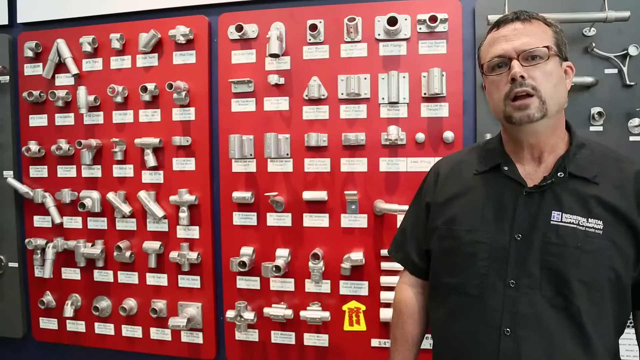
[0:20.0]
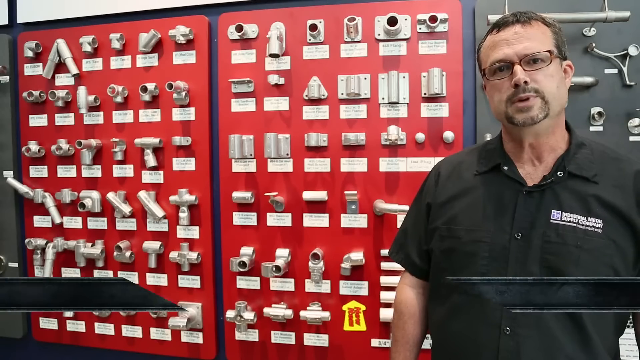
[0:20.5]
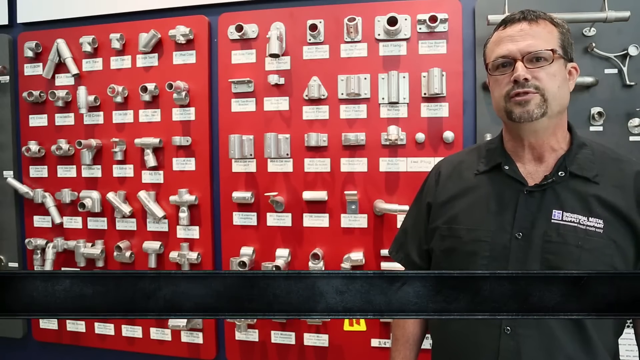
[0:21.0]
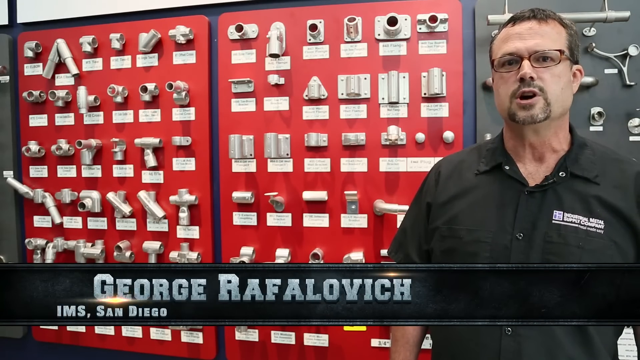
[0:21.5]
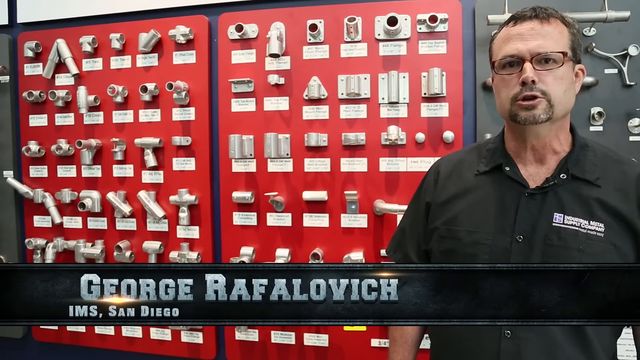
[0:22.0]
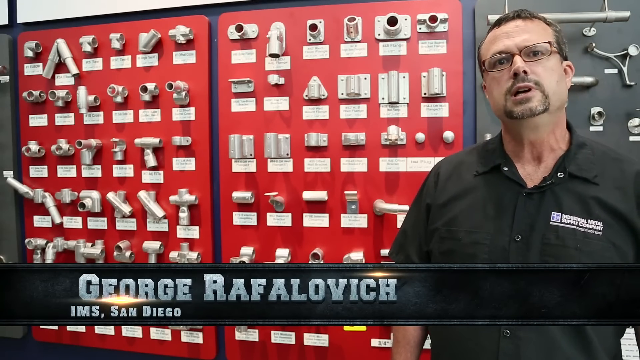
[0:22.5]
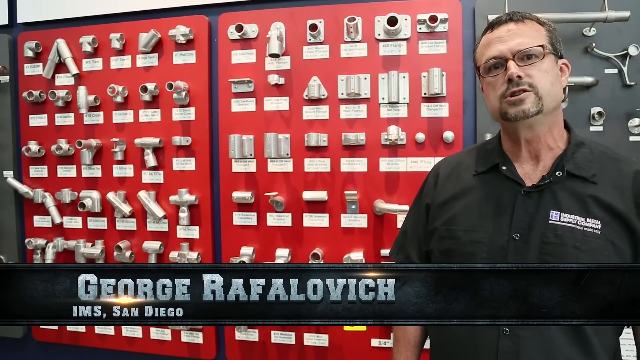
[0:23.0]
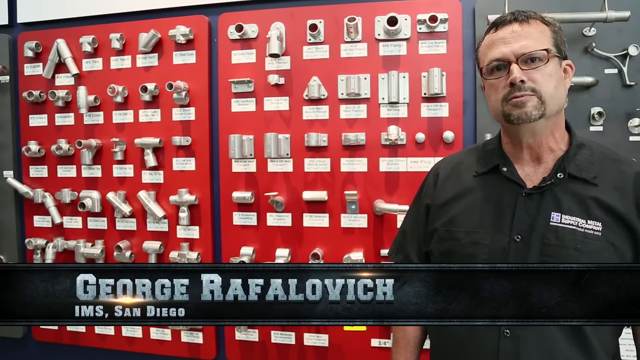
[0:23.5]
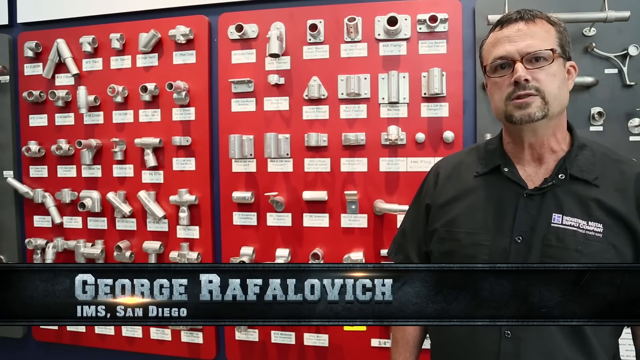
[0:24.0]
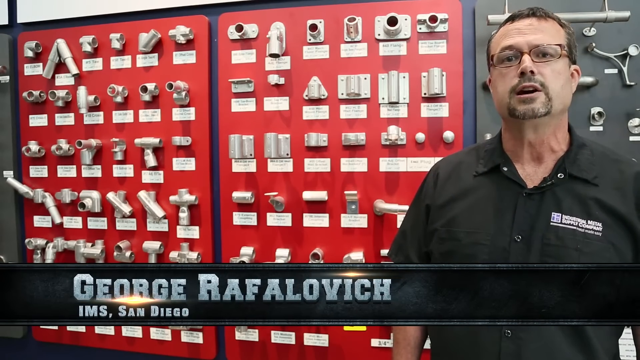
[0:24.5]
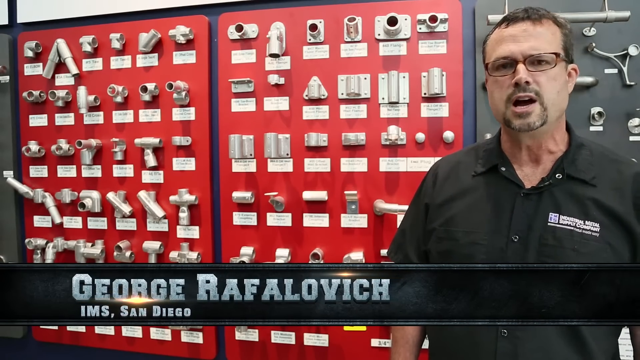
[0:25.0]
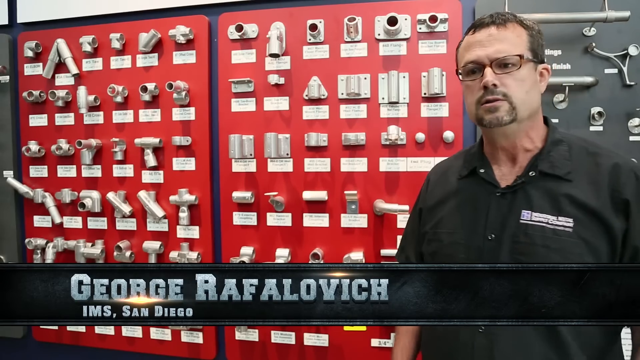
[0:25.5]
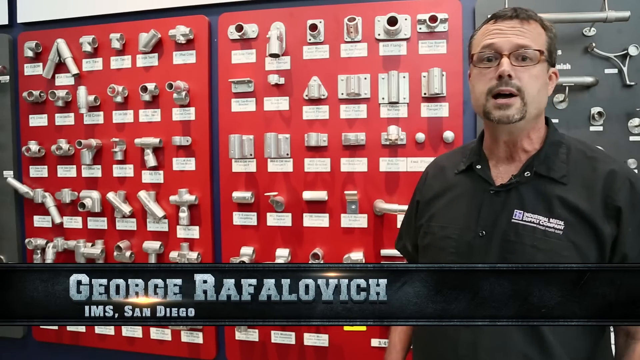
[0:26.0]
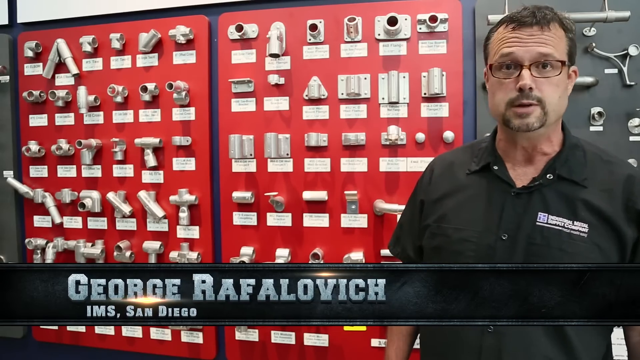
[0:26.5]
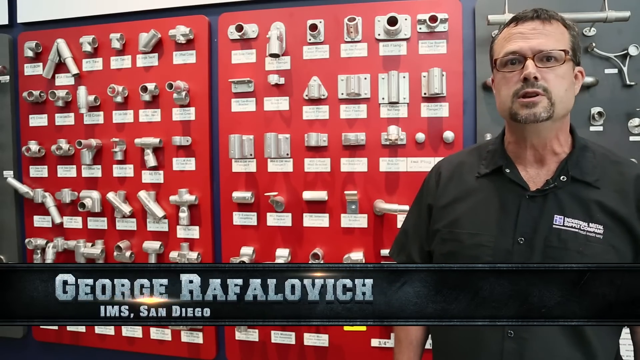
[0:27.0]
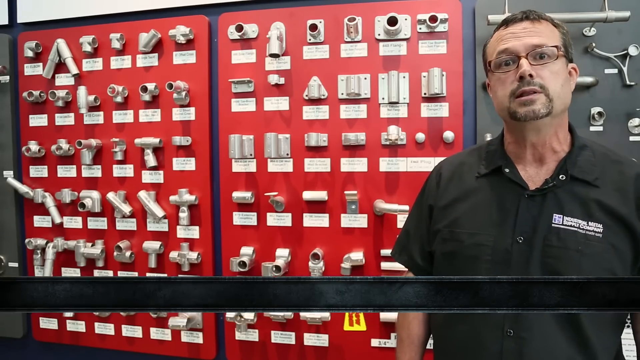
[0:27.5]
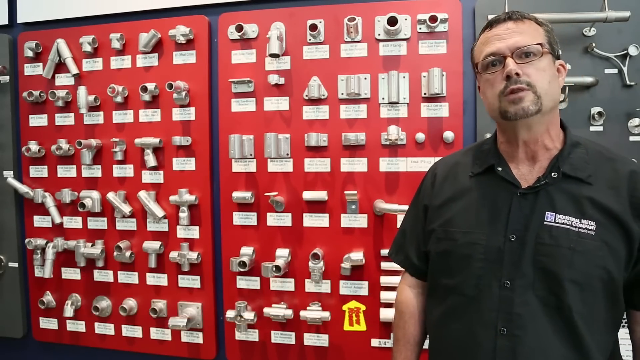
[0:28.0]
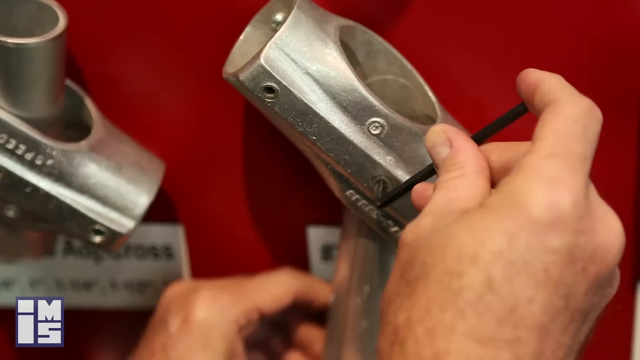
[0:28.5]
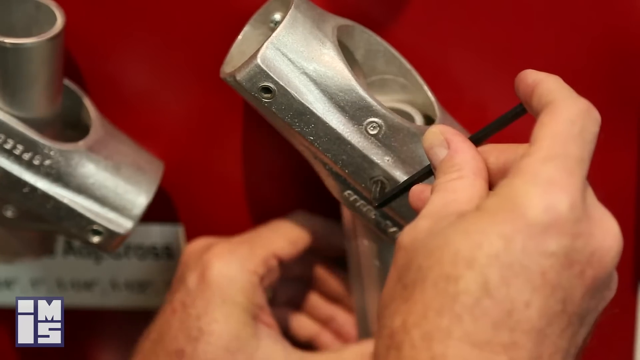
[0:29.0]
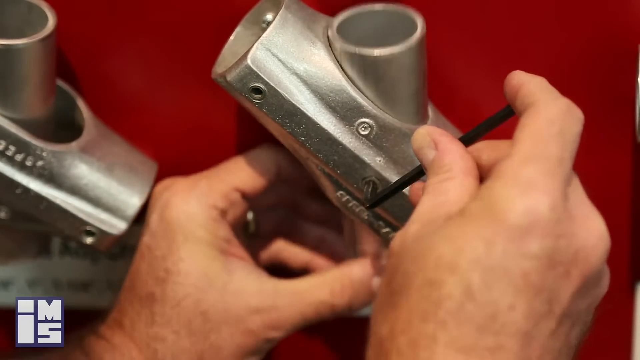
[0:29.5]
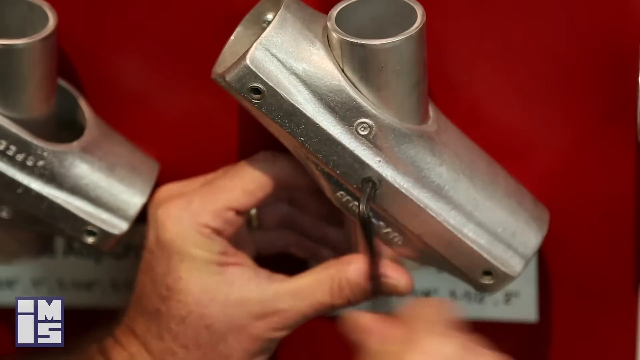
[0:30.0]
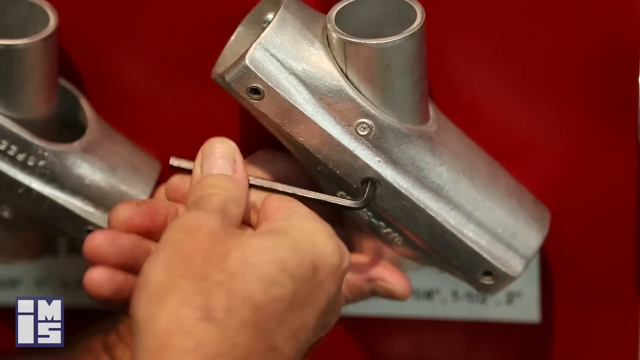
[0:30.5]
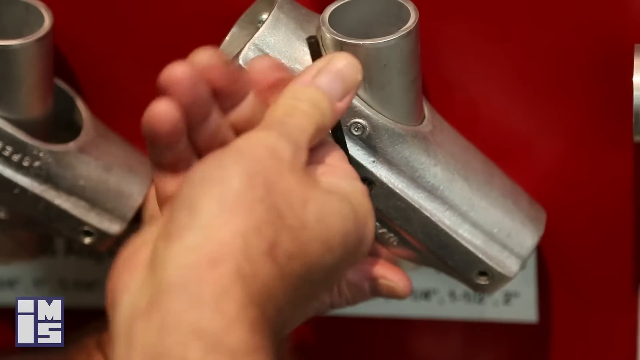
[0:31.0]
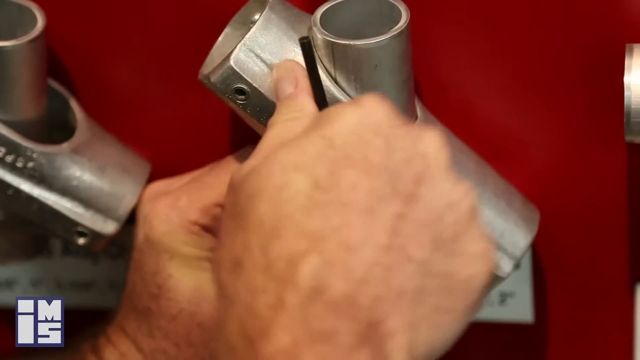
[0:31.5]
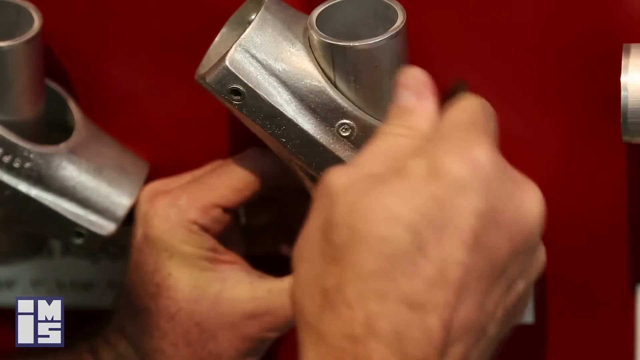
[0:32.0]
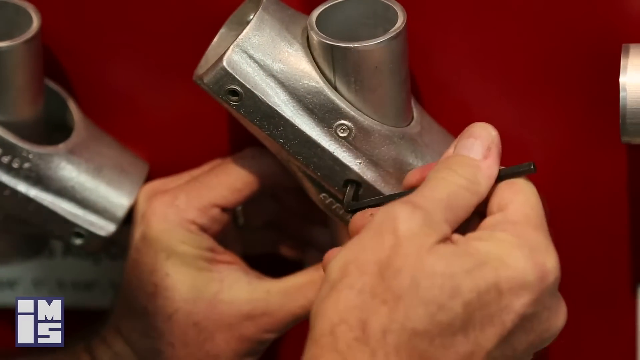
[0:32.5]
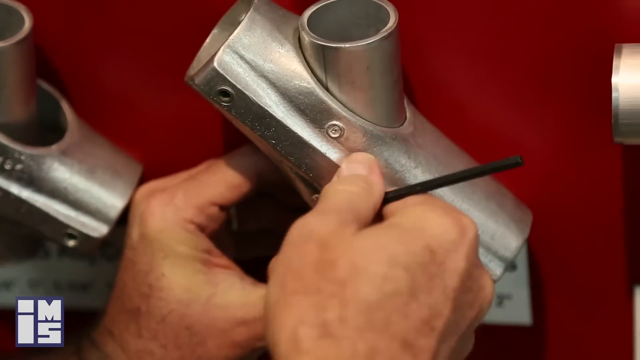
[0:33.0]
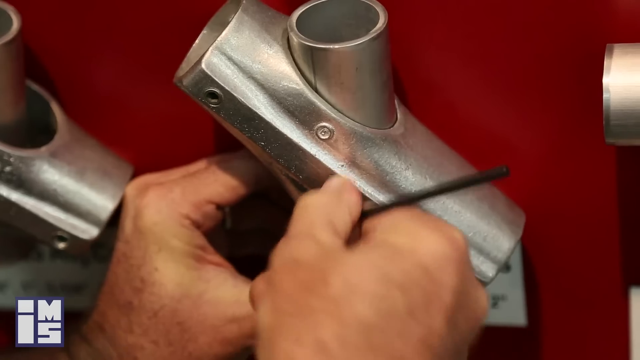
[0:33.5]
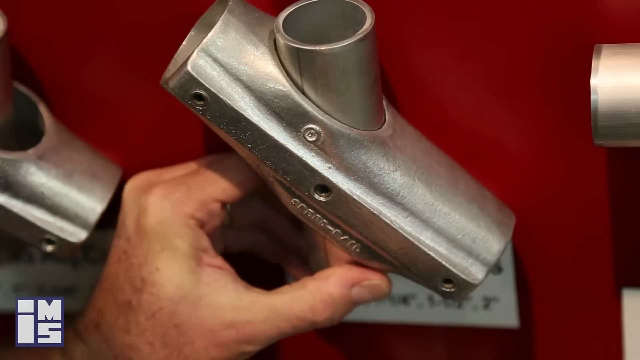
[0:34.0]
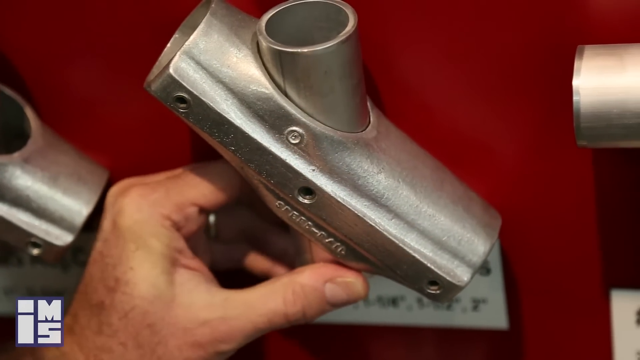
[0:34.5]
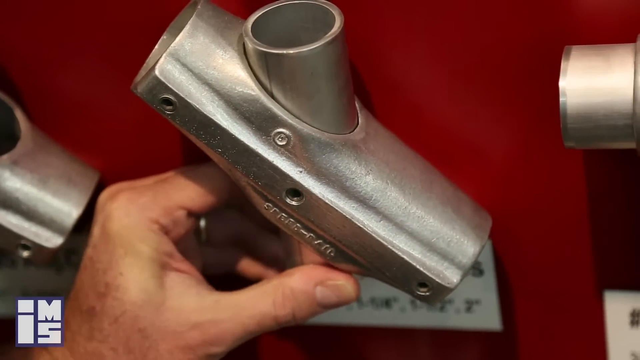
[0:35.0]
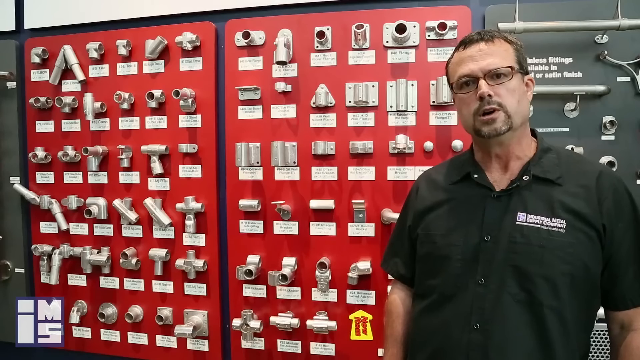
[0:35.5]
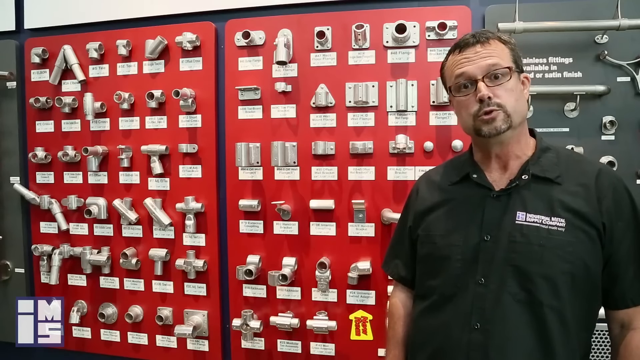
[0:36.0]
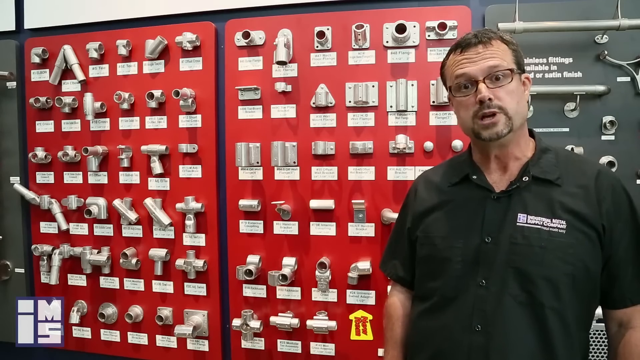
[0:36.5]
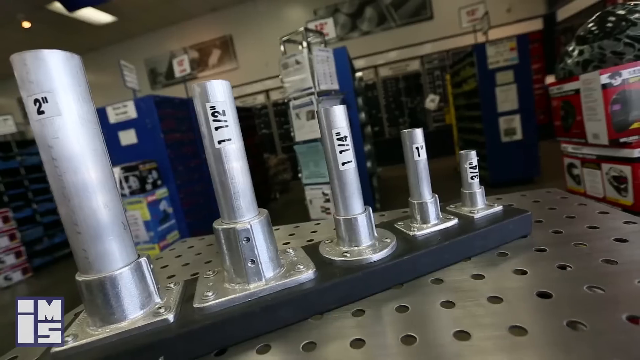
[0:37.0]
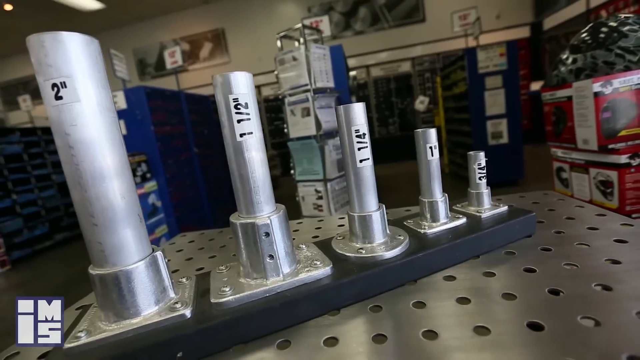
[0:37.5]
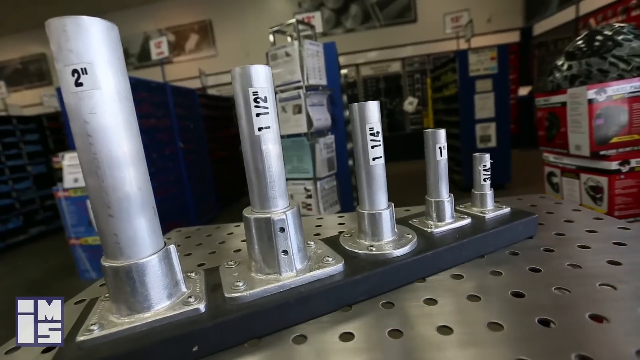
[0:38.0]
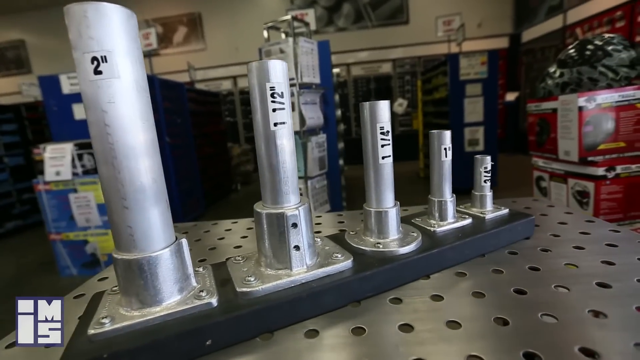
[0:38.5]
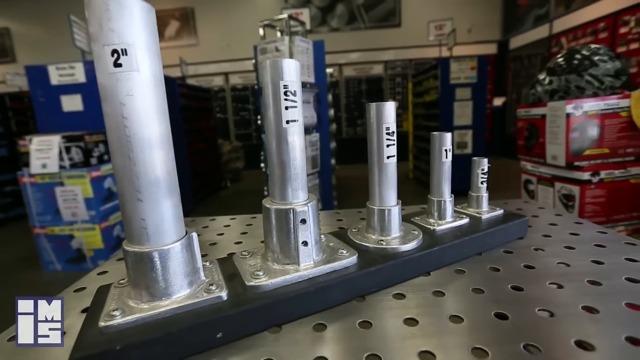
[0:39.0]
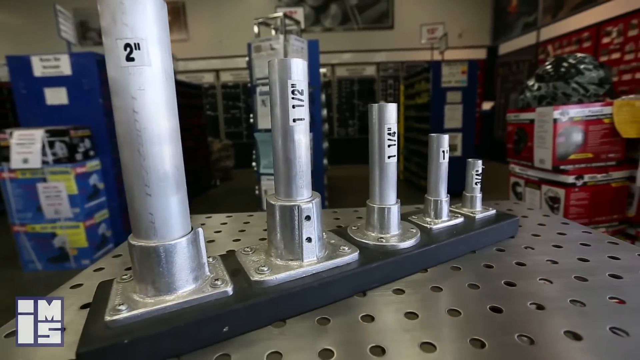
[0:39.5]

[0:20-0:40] A man, George Rafalovich, a worker of the company (an employee or the owner) who is currently staying in San Diego, is standing outside or inside the shop. He illustrates the kinds of products the company has.